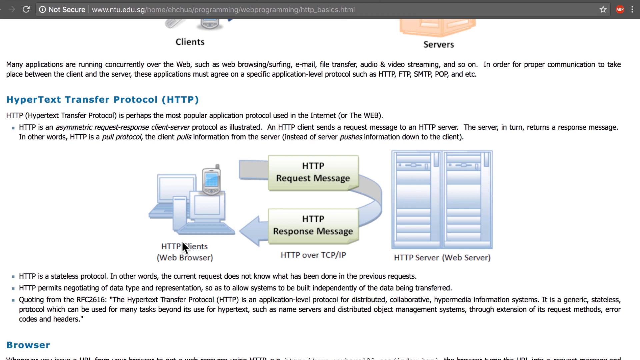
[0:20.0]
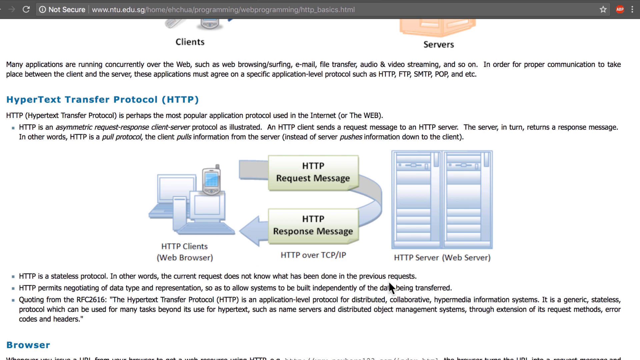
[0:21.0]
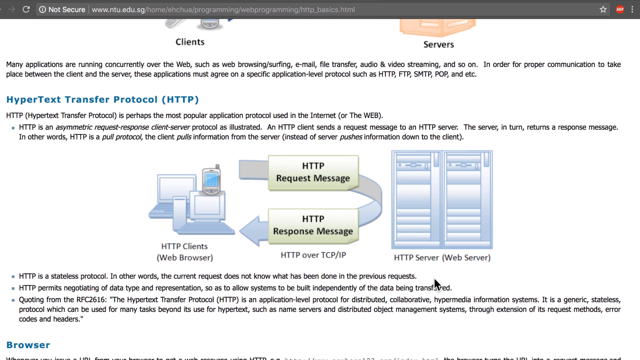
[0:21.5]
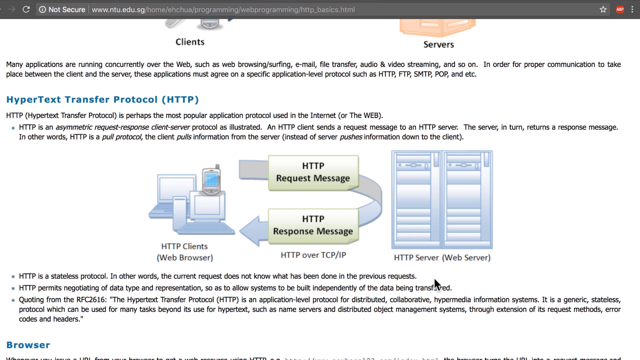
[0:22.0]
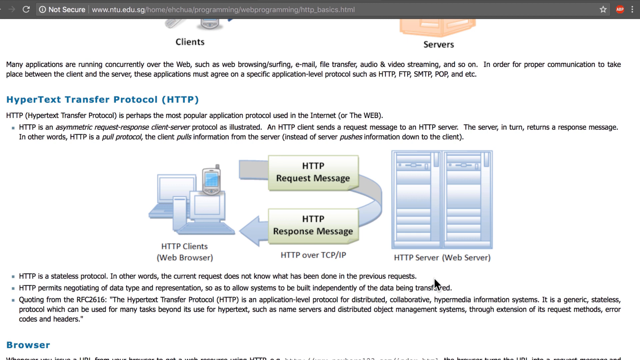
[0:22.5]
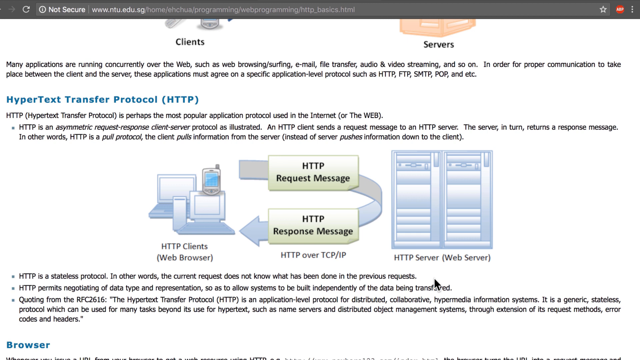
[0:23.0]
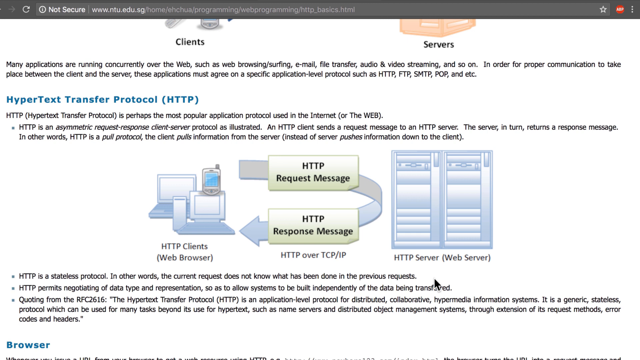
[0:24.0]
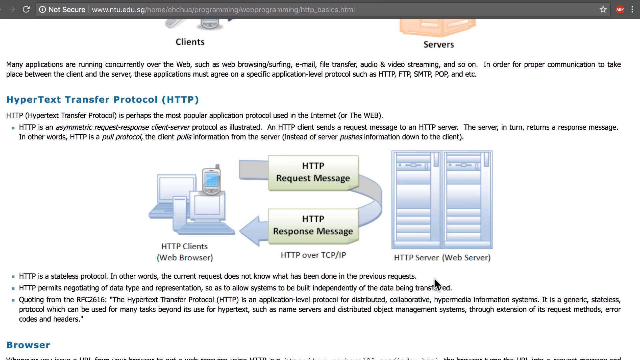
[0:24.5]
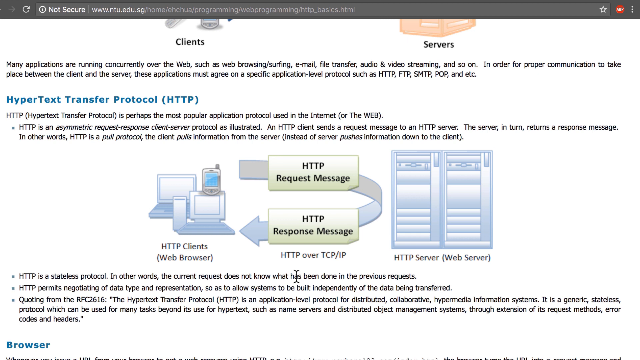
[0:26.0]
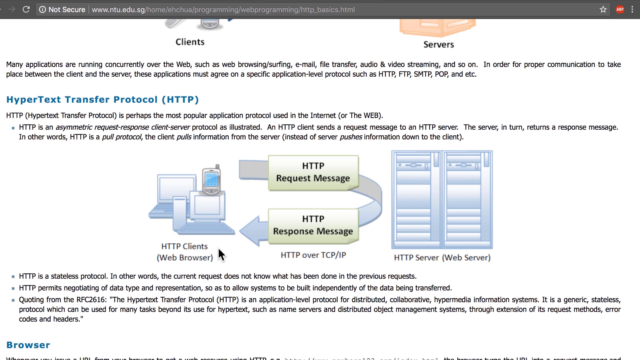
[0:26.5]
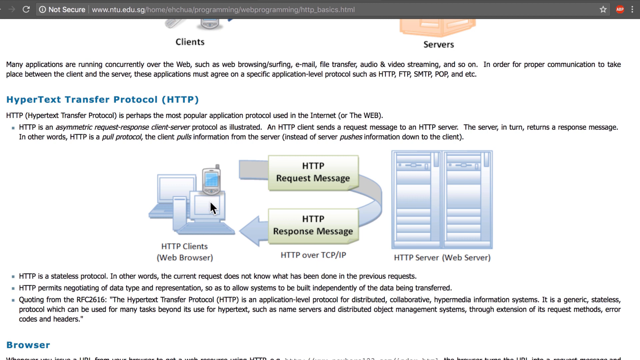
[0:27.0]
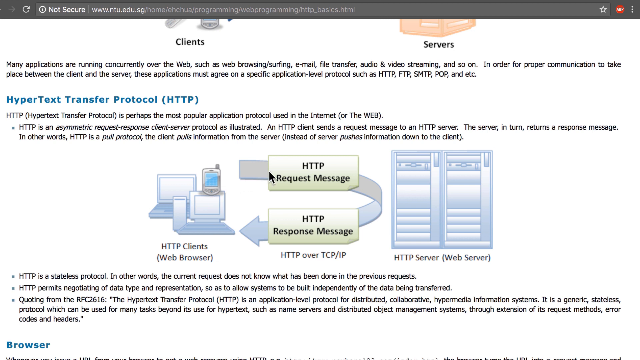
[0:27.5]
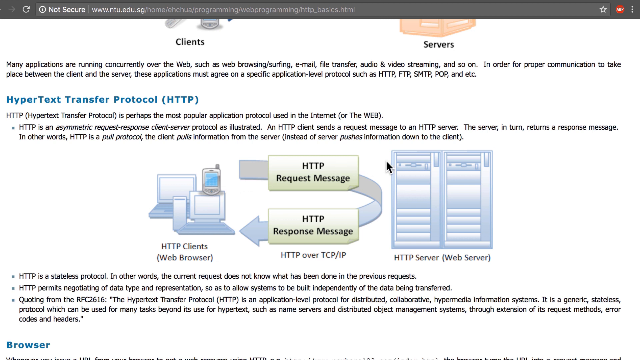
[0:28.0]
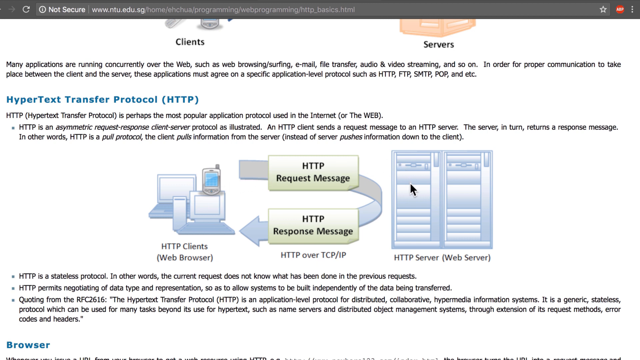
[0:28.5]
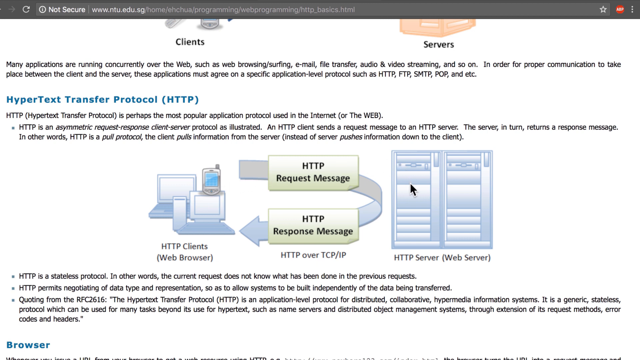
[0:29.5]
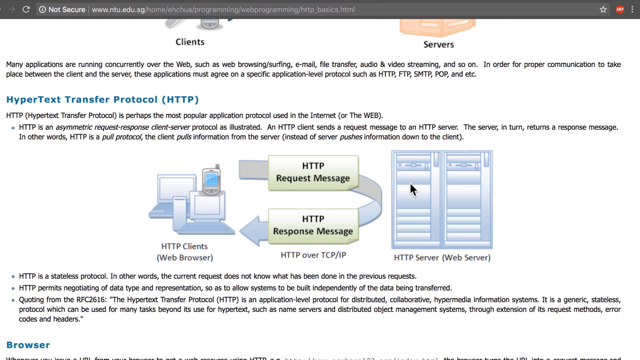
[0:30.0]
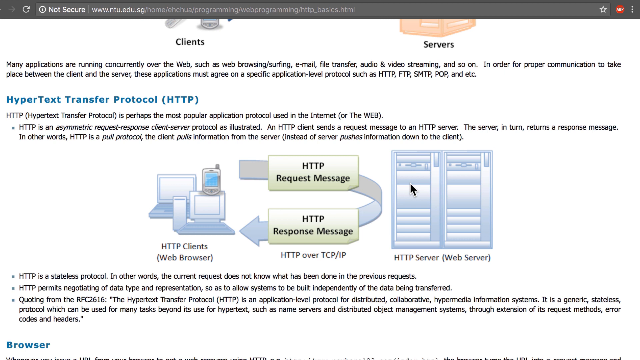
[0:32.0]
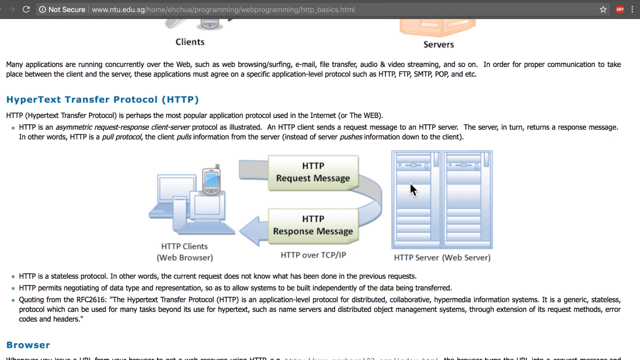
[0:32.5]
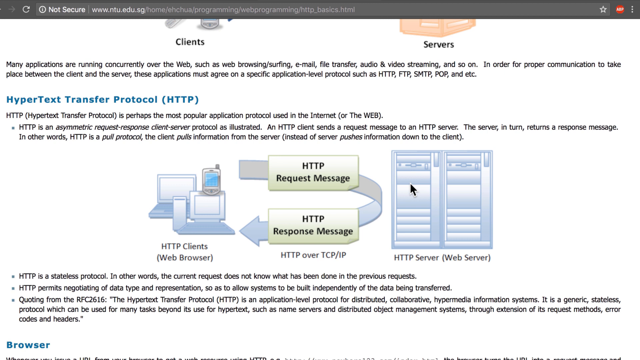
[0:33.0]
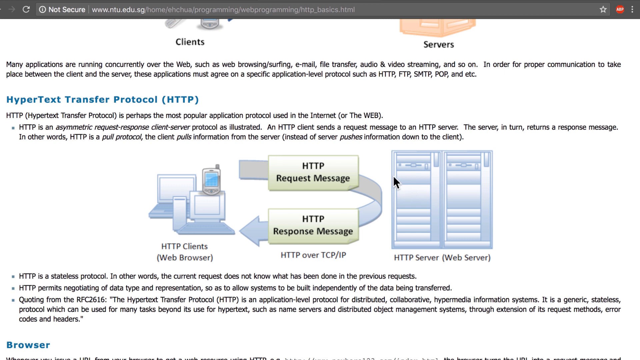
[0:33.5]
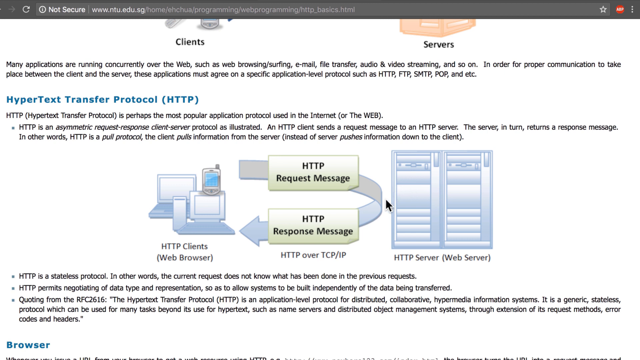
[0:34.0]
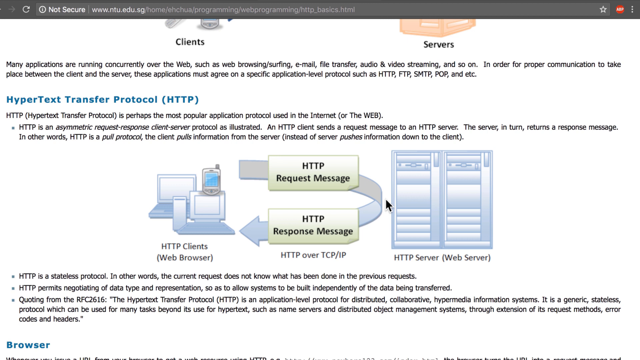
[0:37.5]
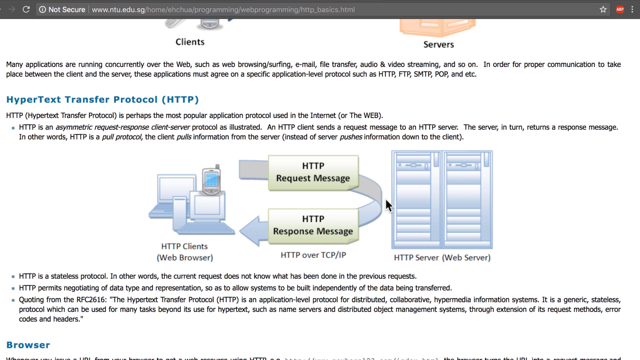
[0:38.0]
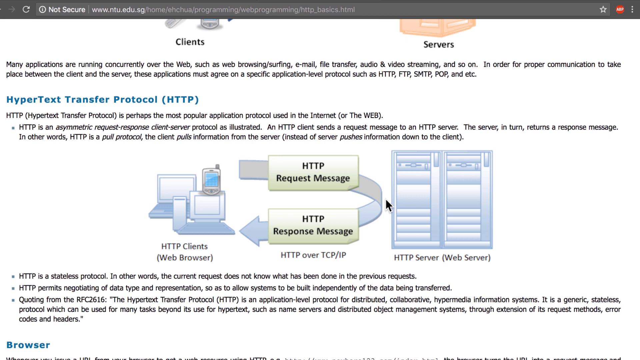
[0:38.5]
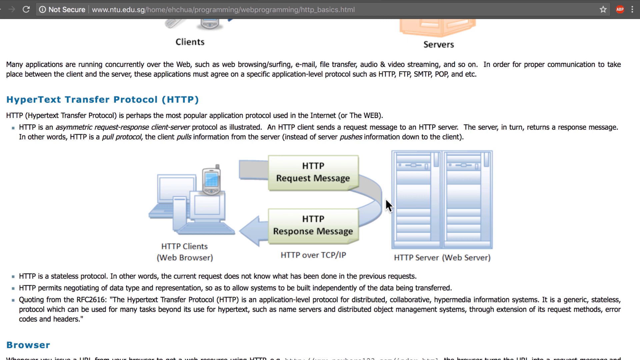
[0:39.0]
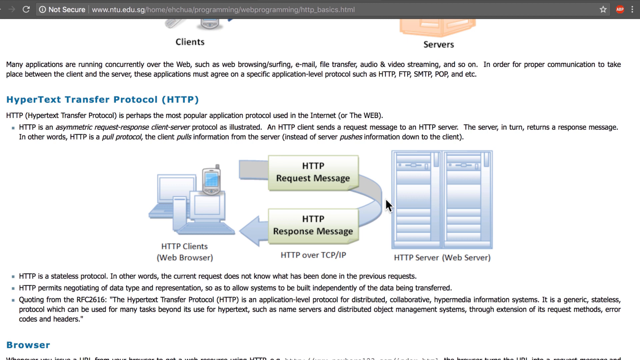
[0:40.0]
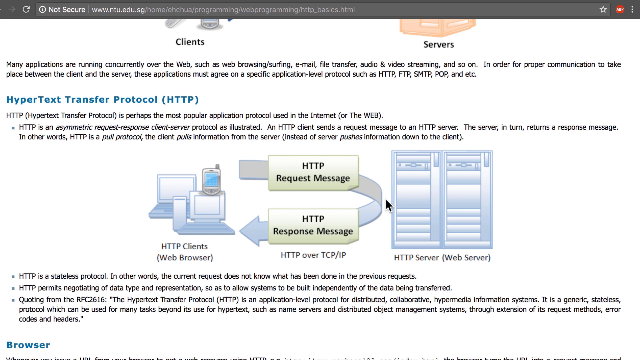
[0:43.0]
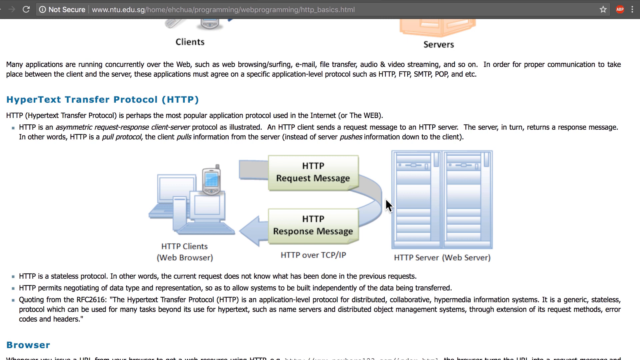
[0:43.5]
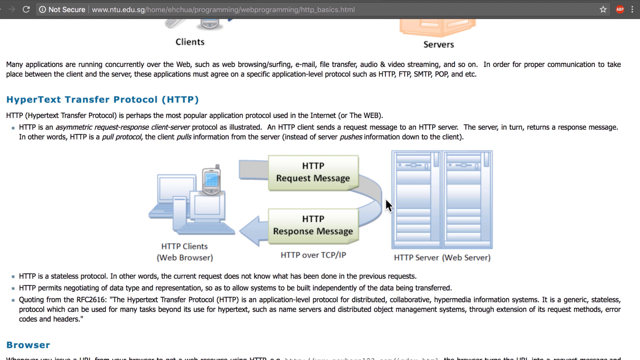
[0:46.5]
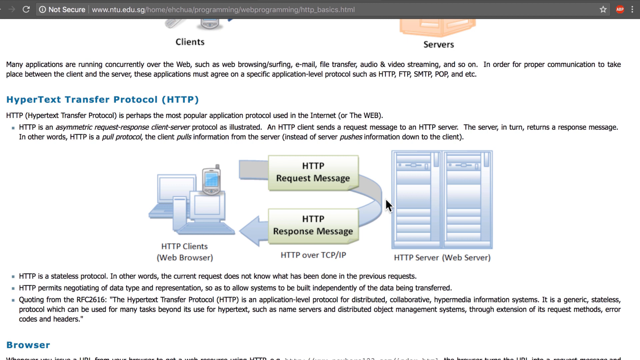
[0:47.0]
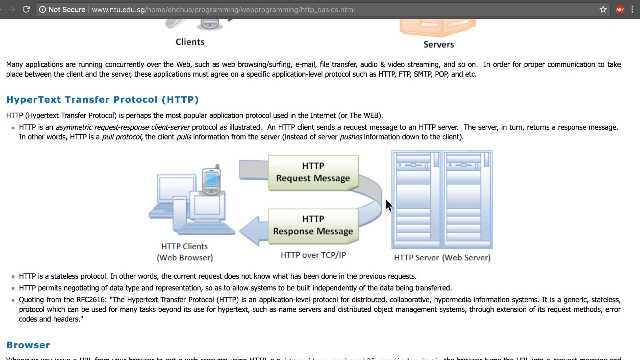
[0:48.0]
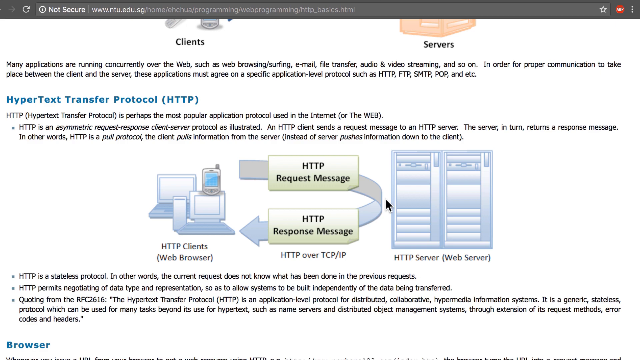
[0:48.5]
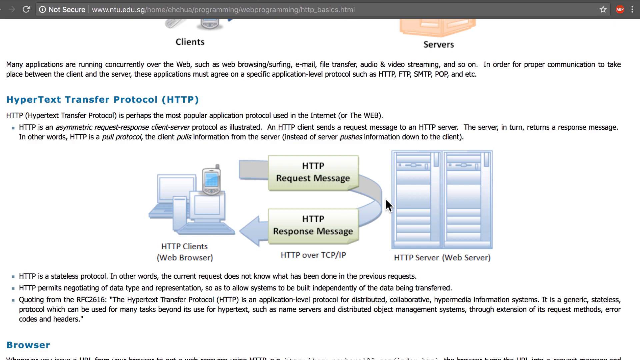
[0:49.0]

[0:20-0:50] The page shows an image at the top labeled "clients" on the left and another image labeled "servers" on the right. Below is a message reading "many applications are running concurrently over the web, such as web browsing, surfing, email, etc." Under that is a section titled "Hypertext Transfer Protocol, HTTP," with text explaining what HTTP is and how it connects the browser to the web server, illustrated in a simple diagram. The narrator slowly moves the mouse from the HTTP client around through the image. Beneath the image, text reads "HTTP is stateless protocol. The current request does not know what has been done in the previous request." and continues with "HTTP permits."